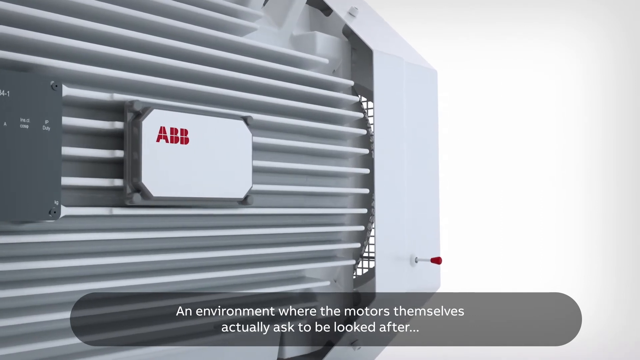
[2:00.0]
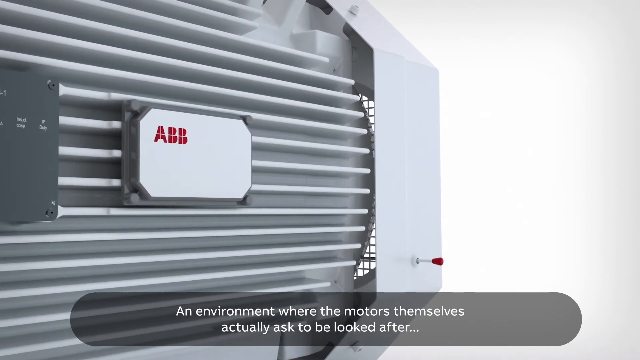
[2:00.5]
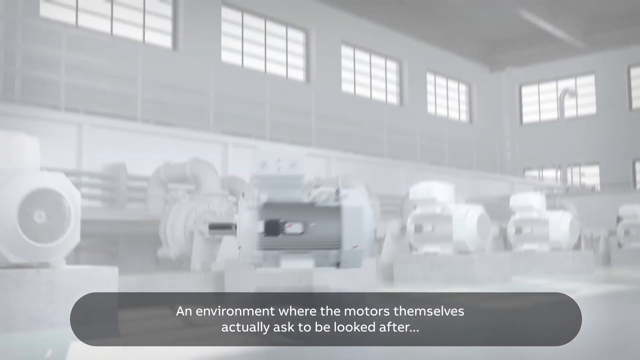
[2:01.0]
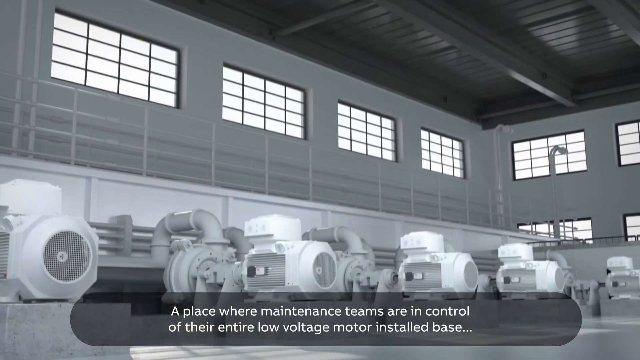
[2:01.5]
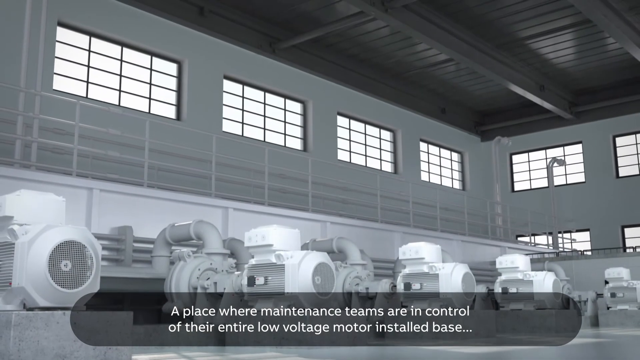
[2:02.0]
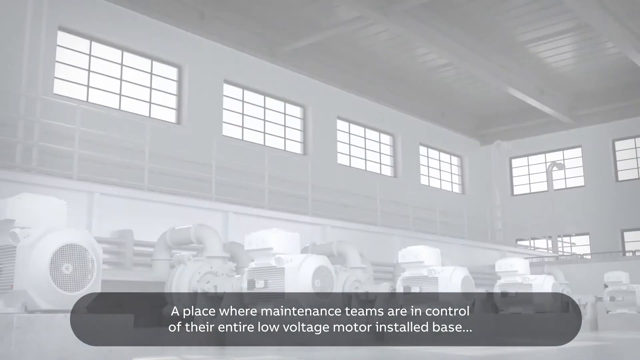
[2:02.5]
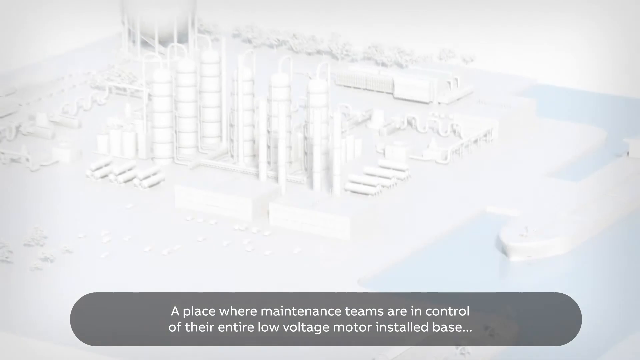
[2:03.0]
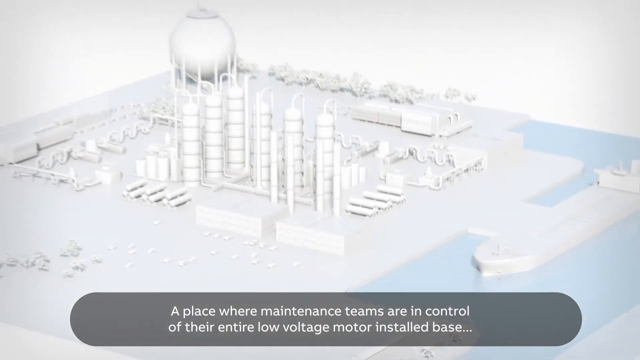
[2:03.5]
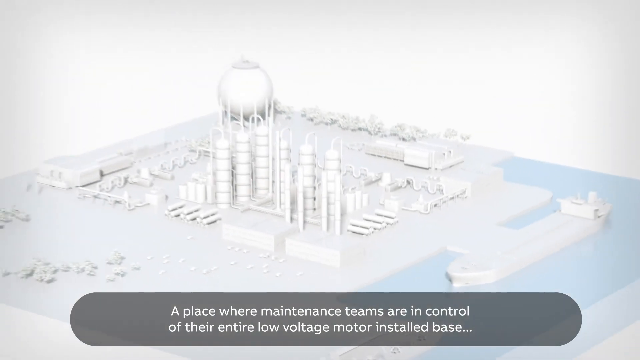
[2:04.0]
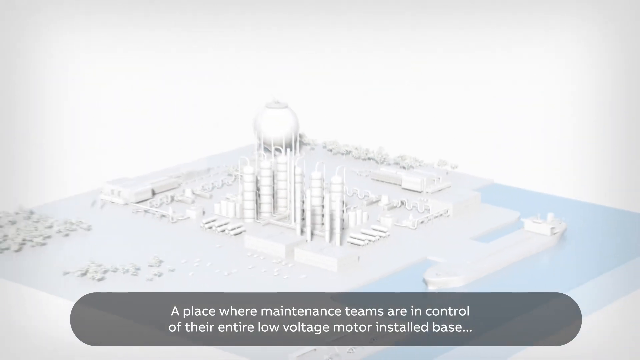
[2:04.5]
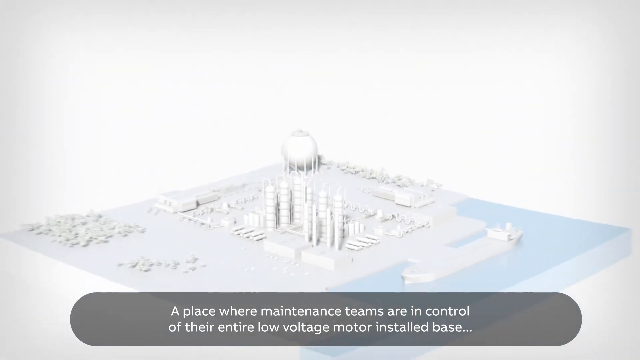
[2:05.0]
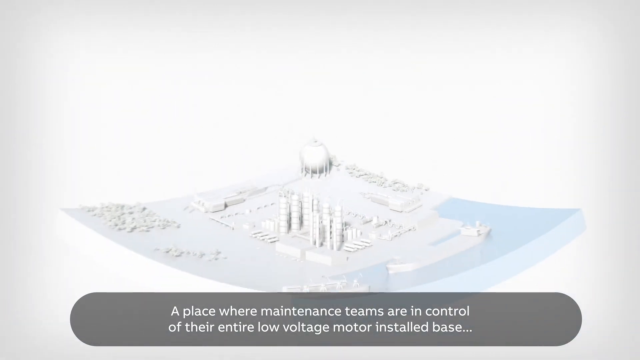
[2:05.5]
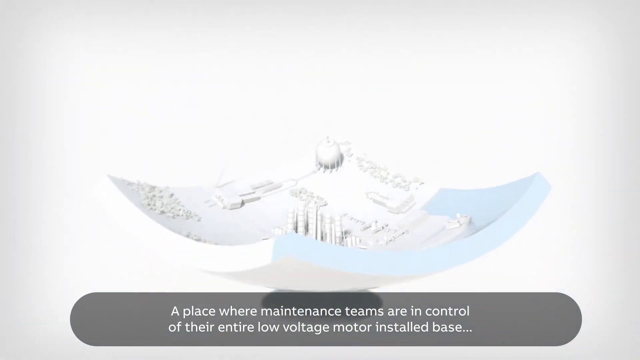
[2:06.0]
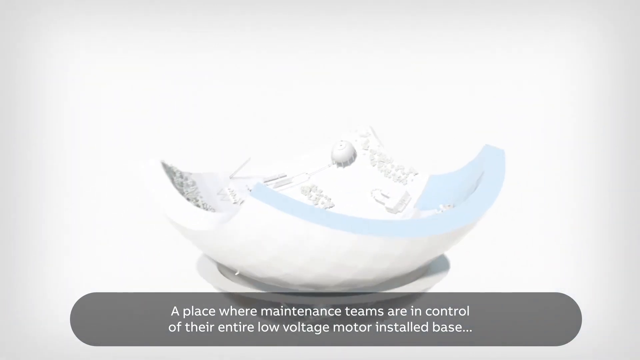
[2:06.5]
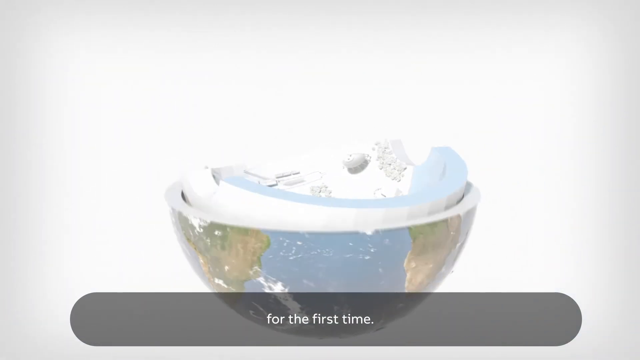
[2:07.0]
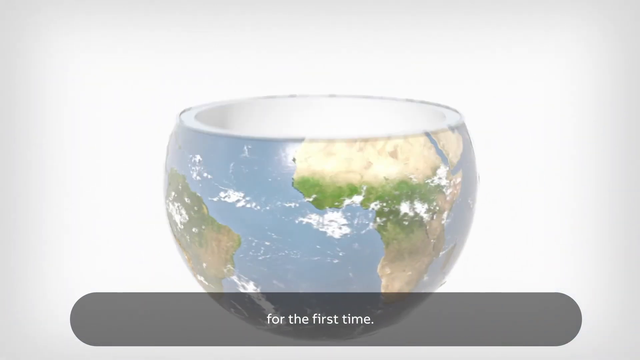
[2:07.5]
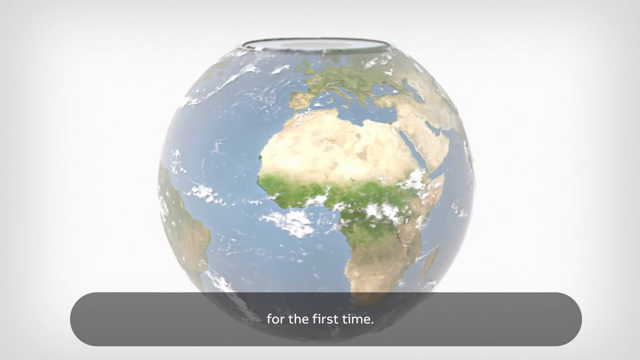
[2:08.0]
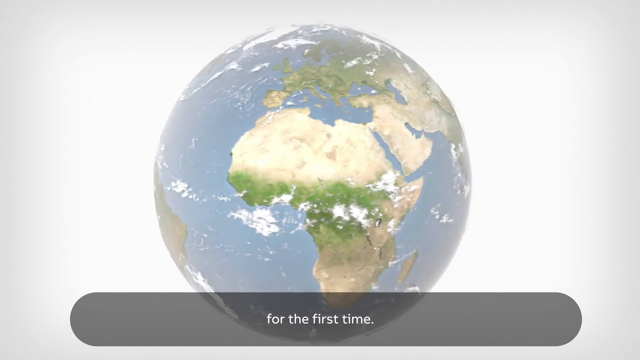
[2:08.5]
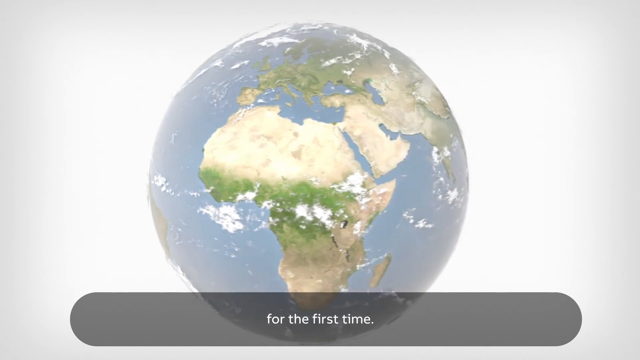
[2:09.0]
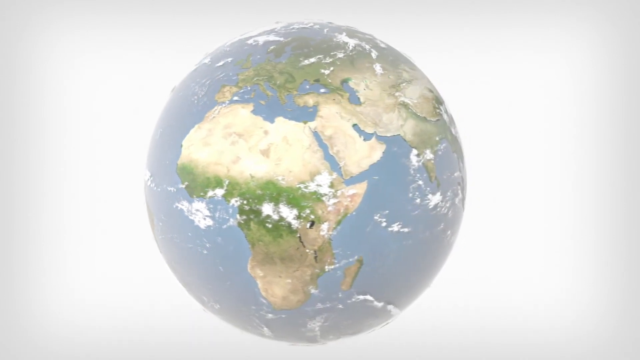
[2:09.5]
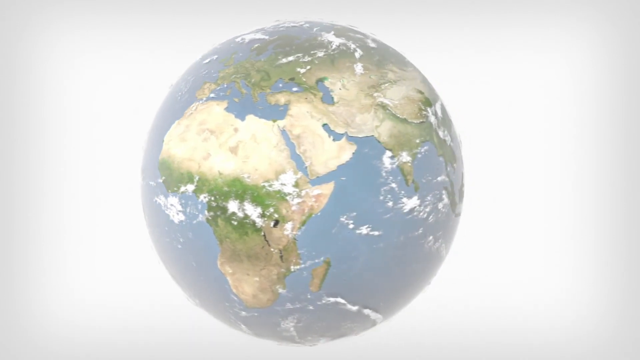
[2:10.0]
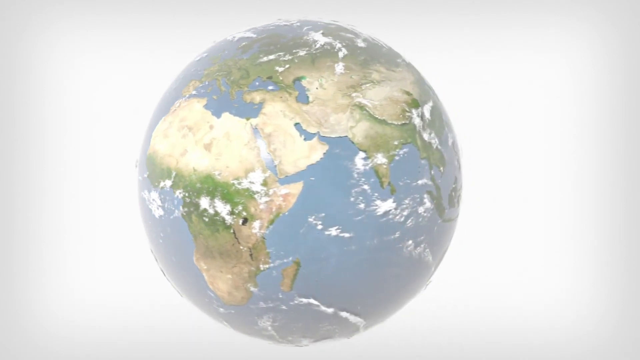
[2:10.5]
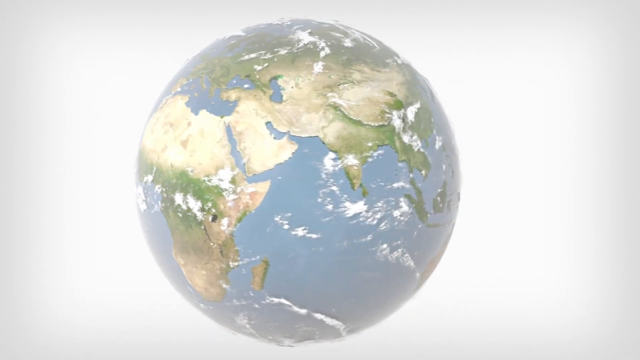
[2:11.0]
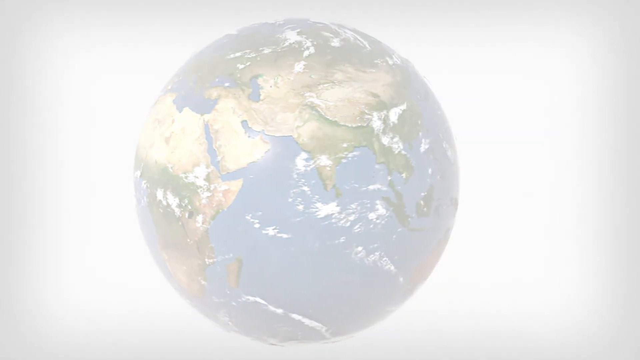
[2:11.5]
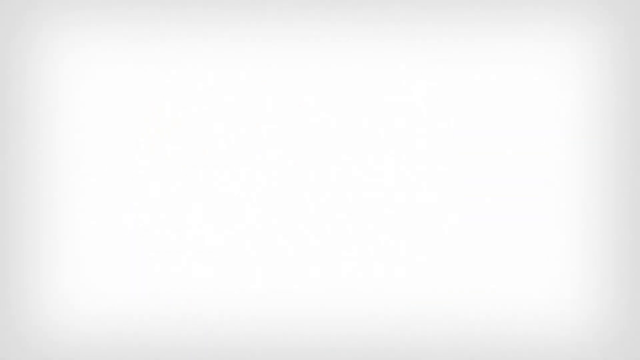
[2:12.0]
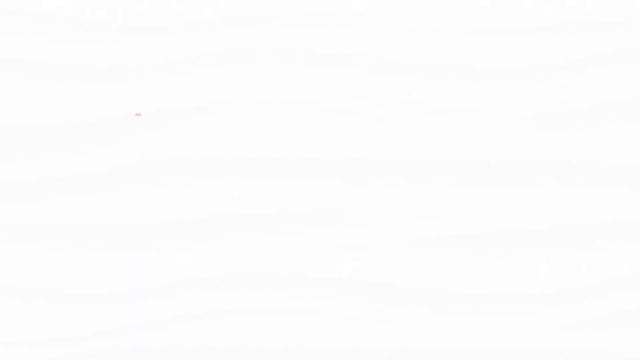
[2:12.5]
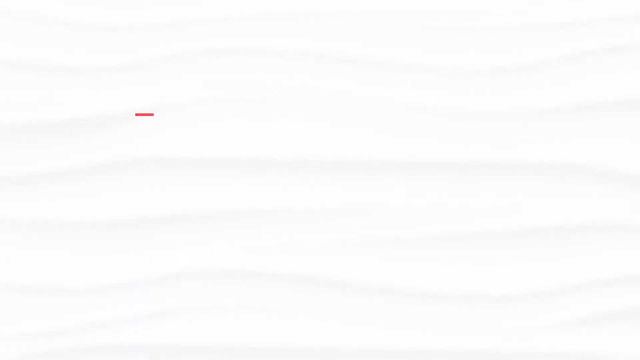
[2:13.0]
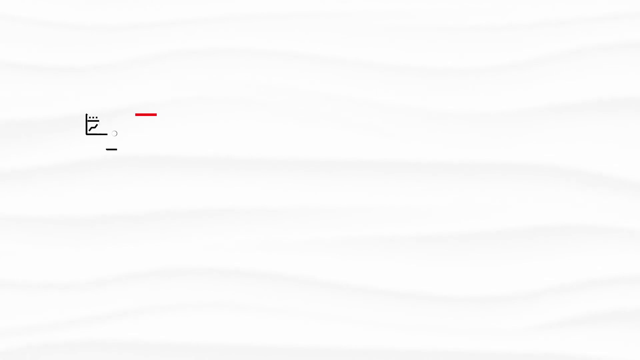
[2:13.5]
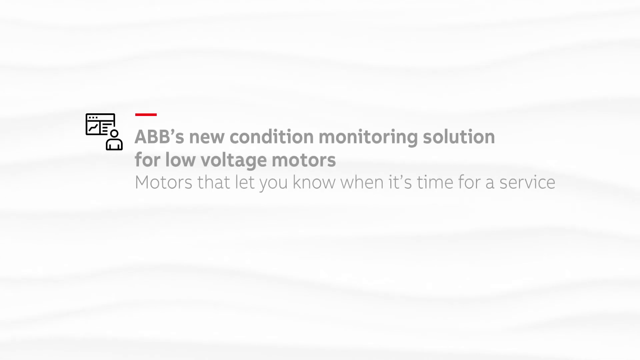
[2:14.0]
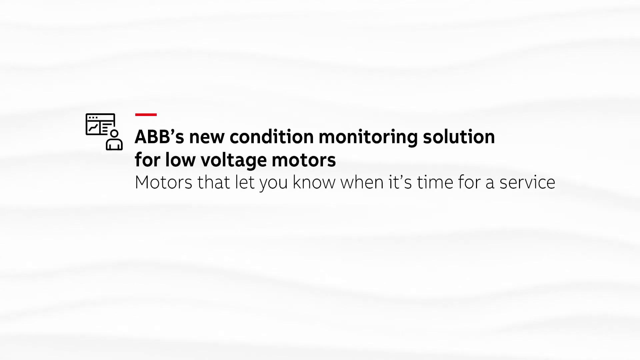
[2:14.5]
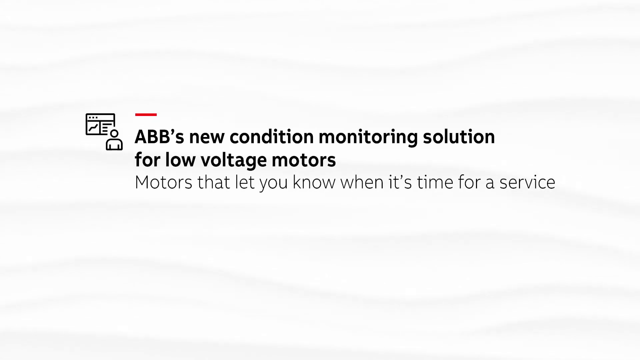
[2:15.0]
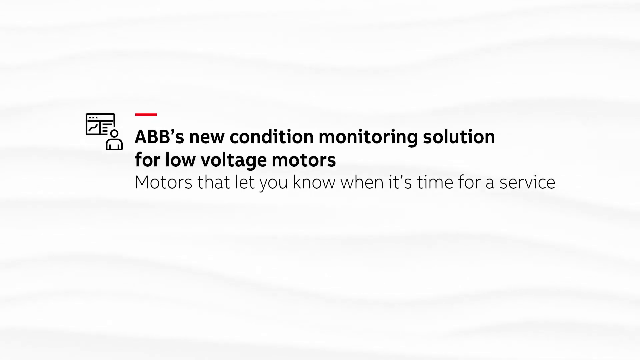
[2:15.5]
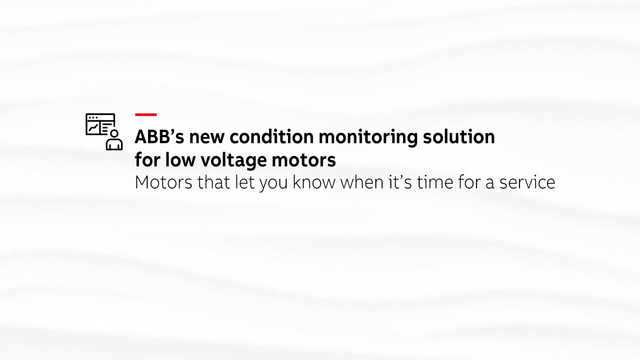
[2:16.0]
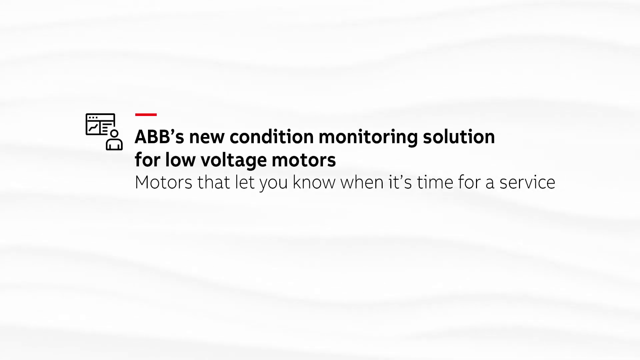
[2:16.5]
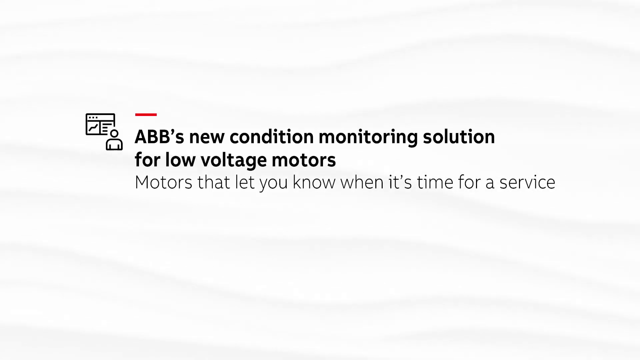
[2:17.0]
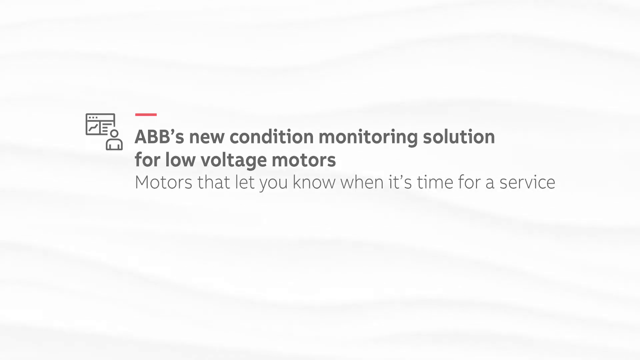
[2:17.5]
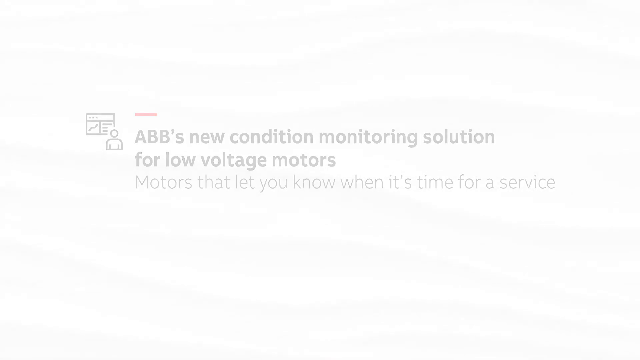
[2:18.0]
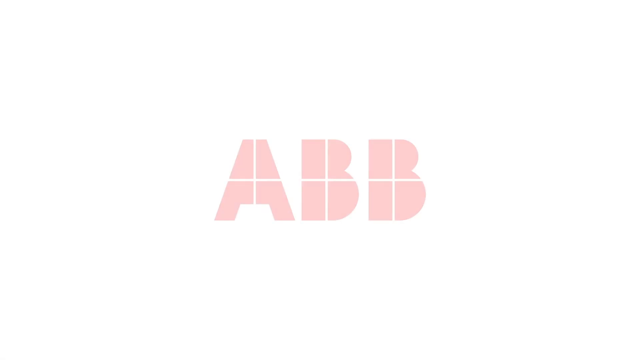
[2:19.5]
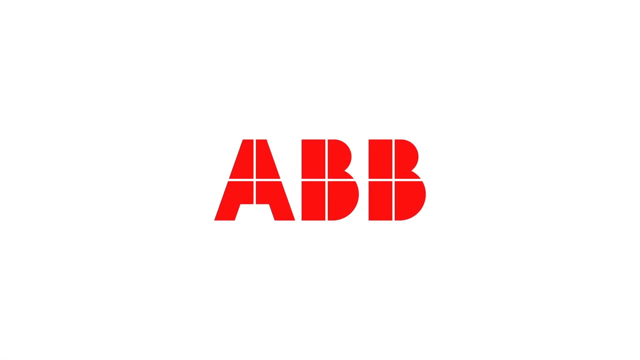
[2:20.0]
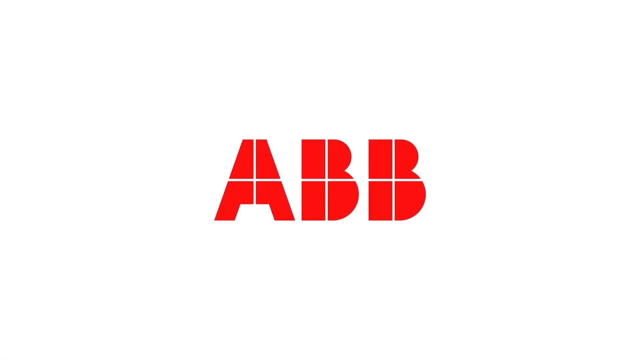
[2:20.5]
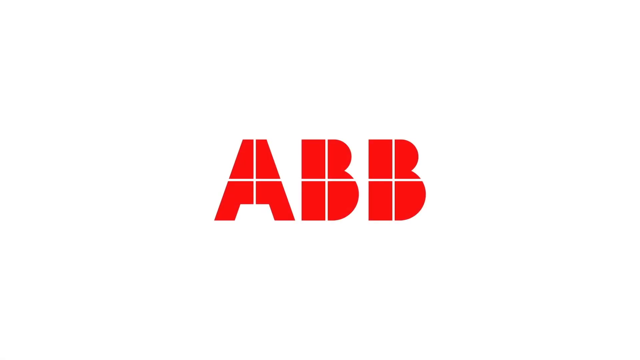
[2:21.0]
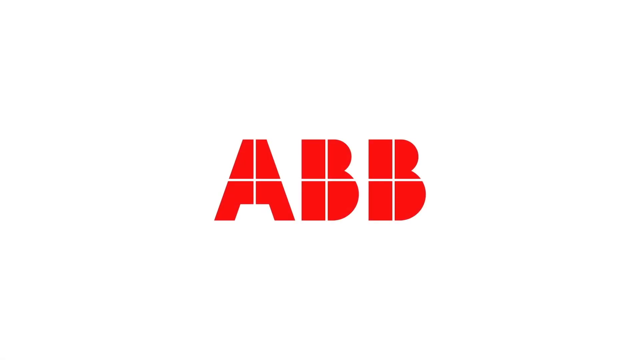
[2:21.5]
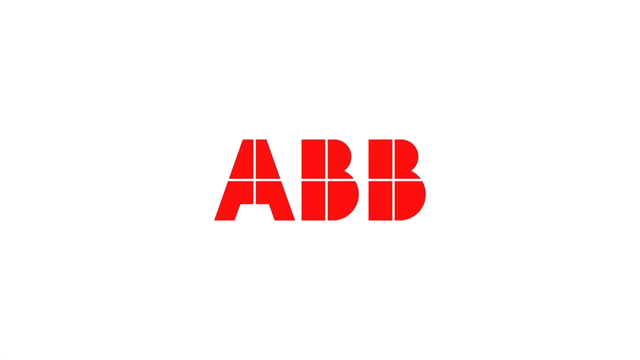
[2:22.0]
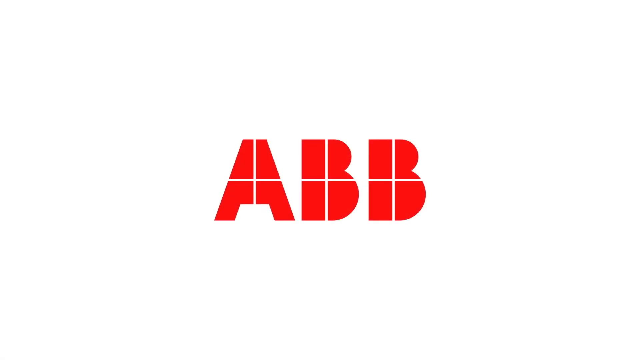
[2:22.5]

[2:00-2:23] A motor is shown, and then the view moves inside a tall warehouse building where multiple of these motors are housed, with four of them across the bottom of the screen. There are about eight windows, four across the back and four on the right side. The scene is in grayscale, with text at the bottom that says "a place where maintenance teams are in control of their entire low-voltage motor installed base." A 3D factory rendering follows, which changes and morphs into a circle that becomes the earth, and the bottom of the screen reads "for the first time." The earth spins around a few times and fades away, and text reads "ABB's new condition monitoring solution for low voltage motors. Motors that let you know when it's time for a service," with a little clip-art image on the left side of the text. That fades out, and the ABB logo appears, with window panes throughout the letters, which are red.